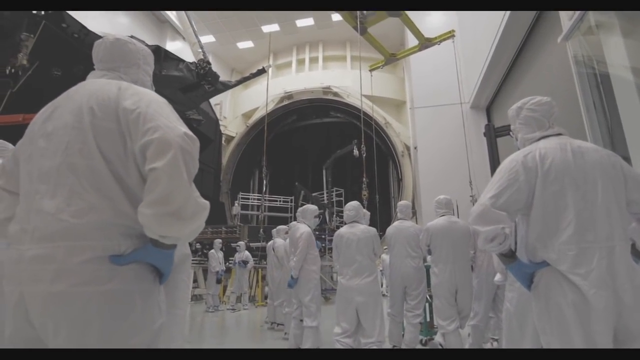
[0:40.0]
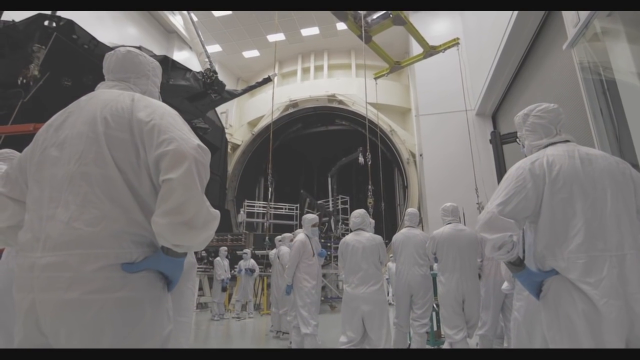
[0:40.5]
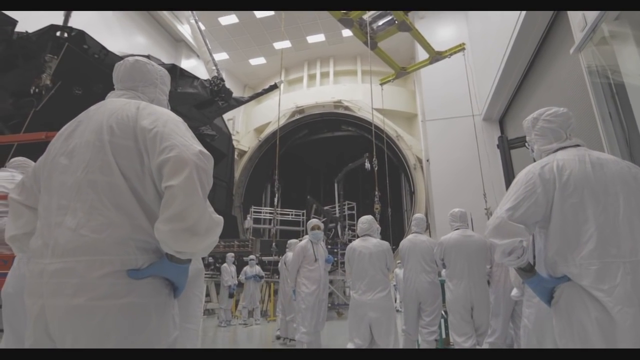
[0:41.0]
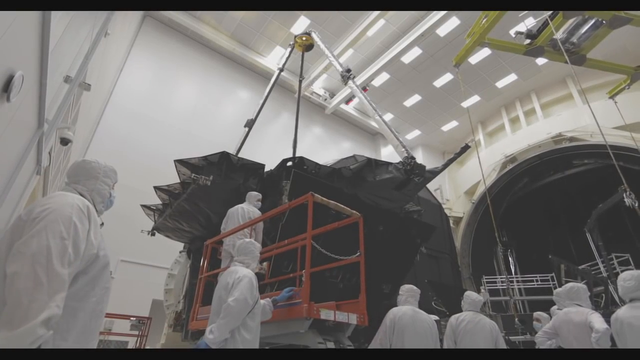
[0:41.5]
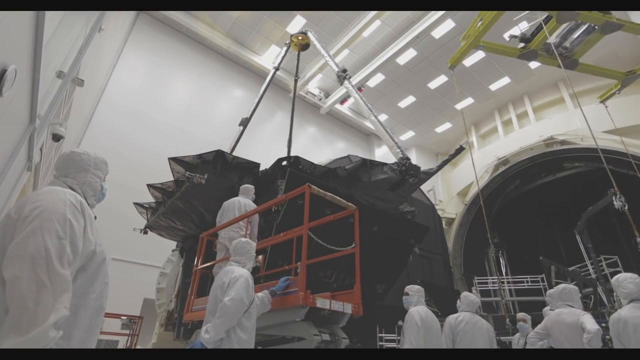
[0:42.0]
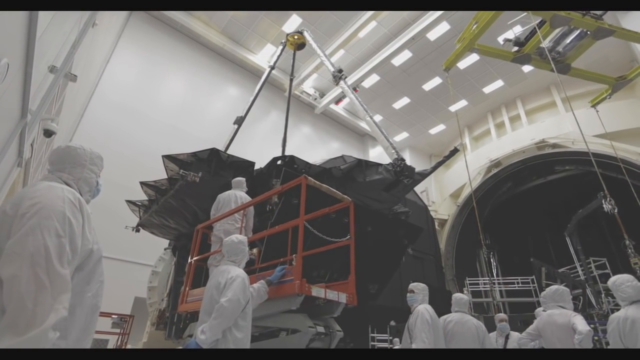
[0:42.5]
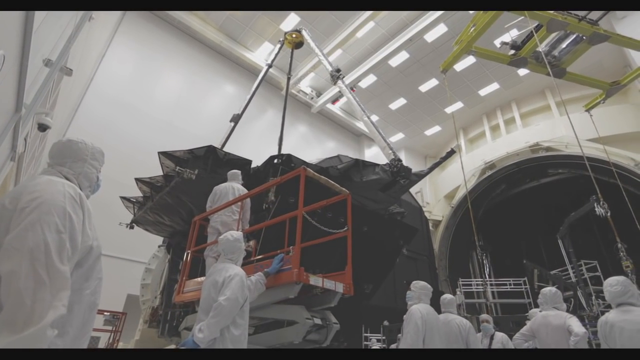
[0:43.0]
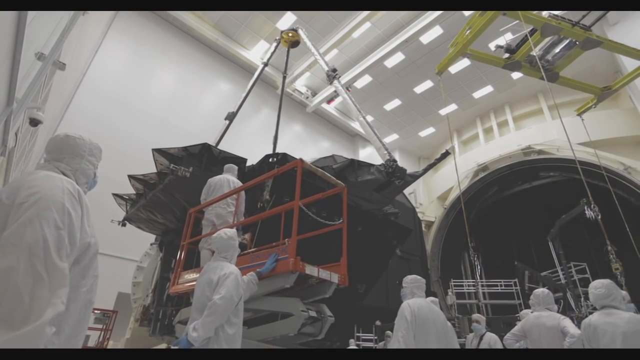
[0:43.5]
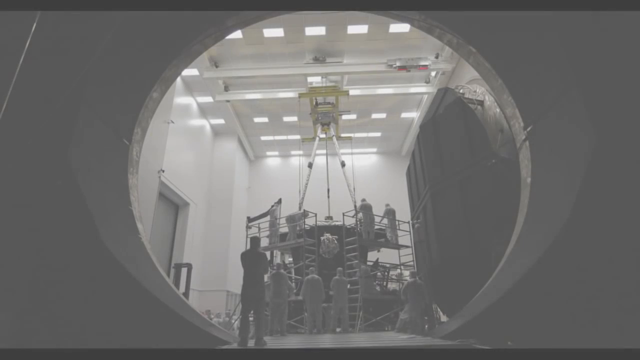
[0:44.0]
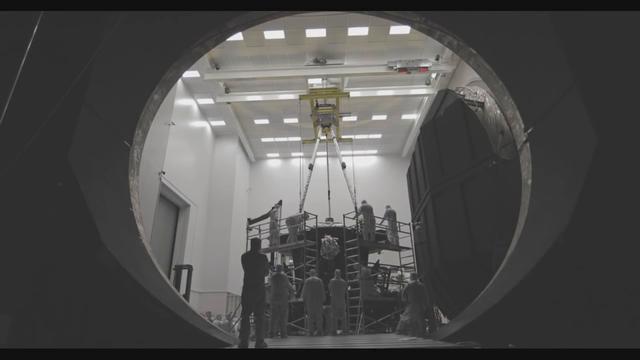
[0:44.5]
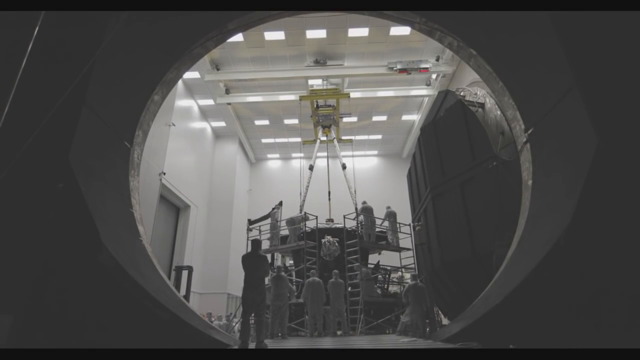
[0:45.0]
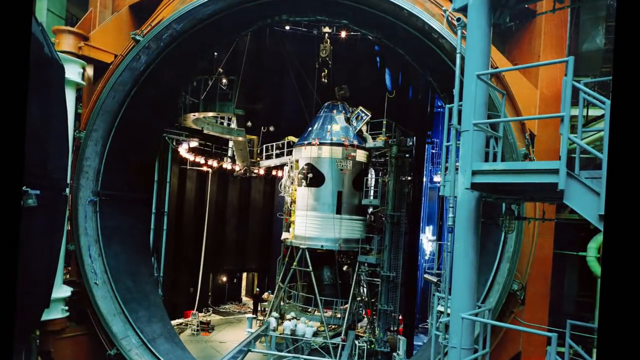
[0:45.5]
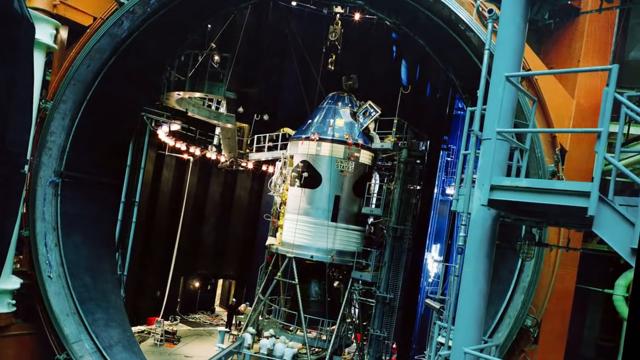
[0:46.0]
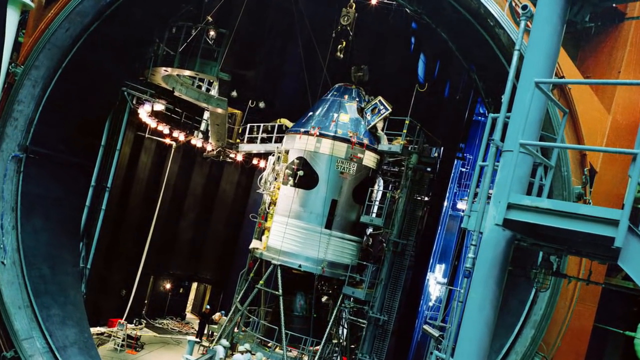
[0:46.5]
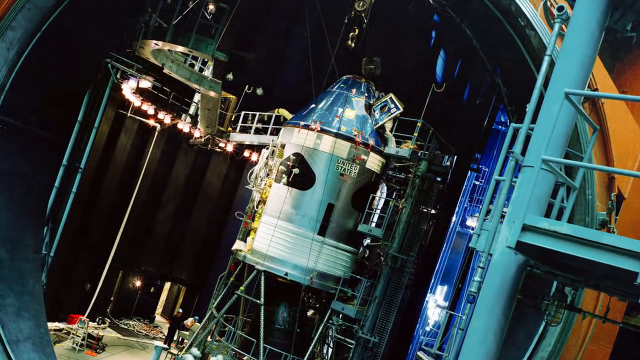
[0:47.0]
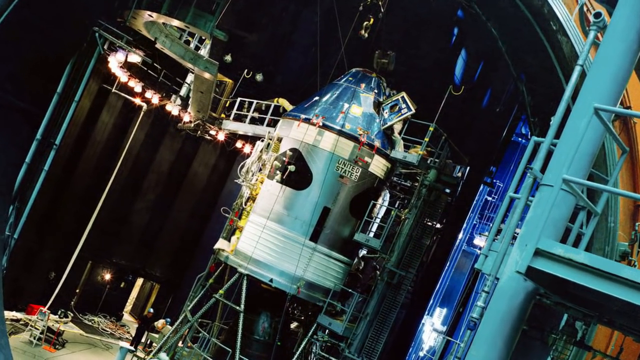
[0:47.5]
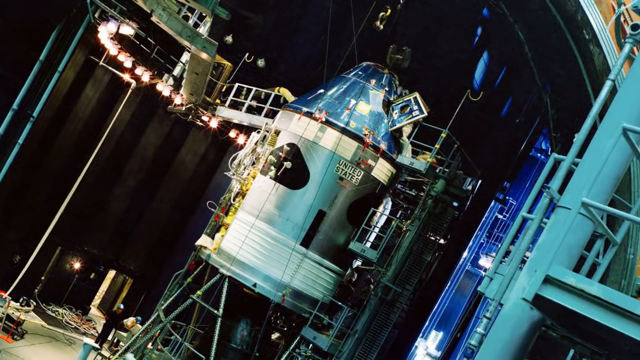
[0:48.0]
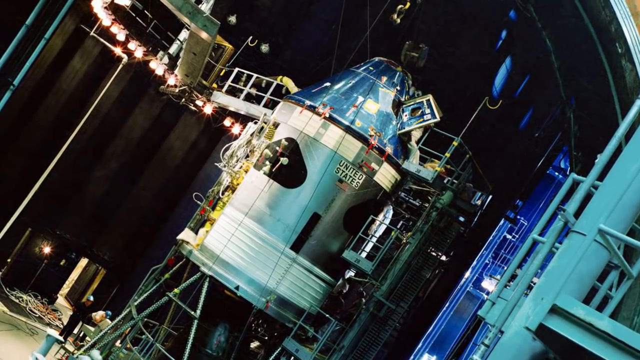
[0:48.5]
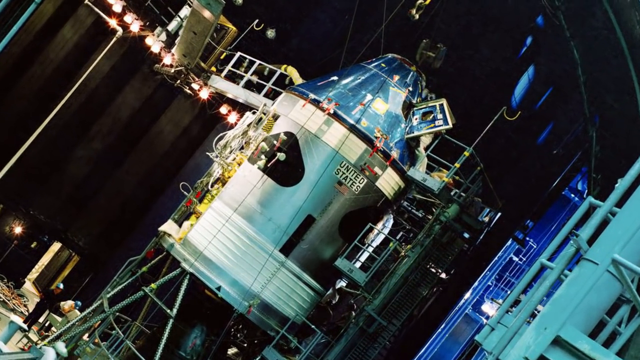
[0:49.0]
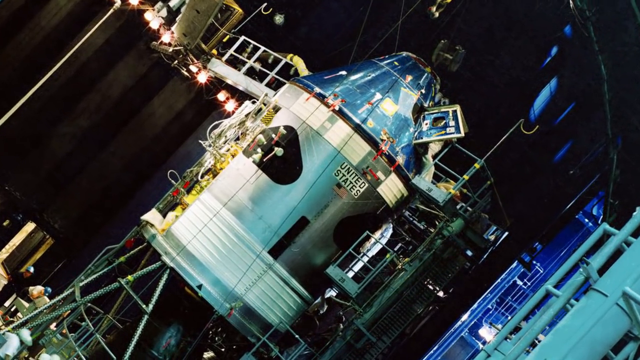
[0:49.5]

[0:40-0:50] The people in full-body white uniforms and blue gloves are seen standing again. A person rides a red platform up to the top of the ceiling. The scene moves to an item that almost looks like a large camera lens, inside of which a crane-type item holds up a metal structure. Then a round structure with a blue staircase on its outside appears, with a satellite seen up close in the middle of the structure.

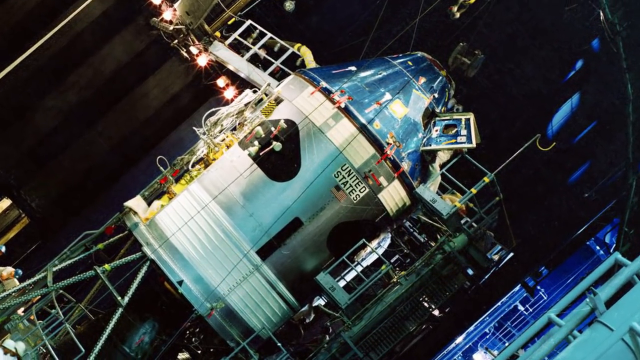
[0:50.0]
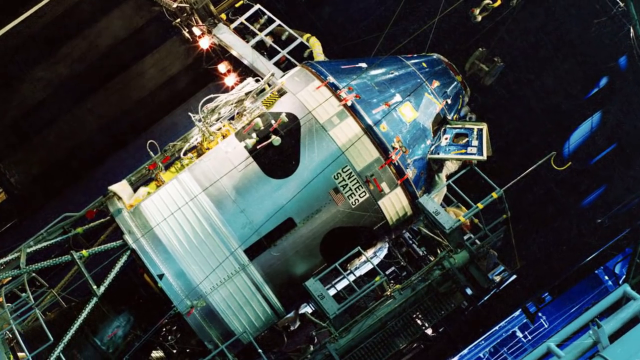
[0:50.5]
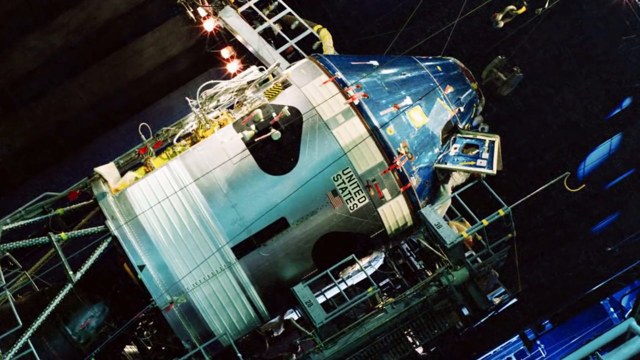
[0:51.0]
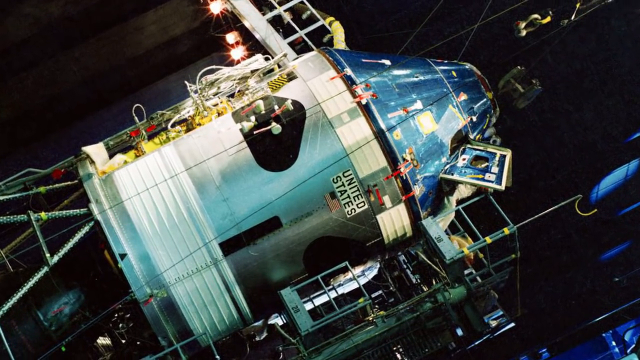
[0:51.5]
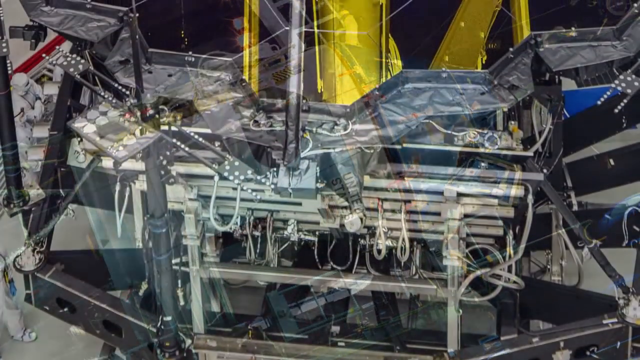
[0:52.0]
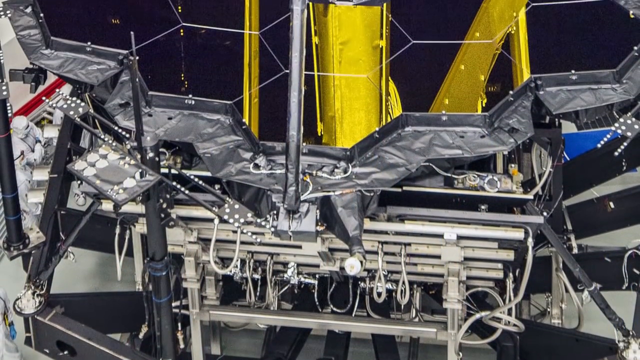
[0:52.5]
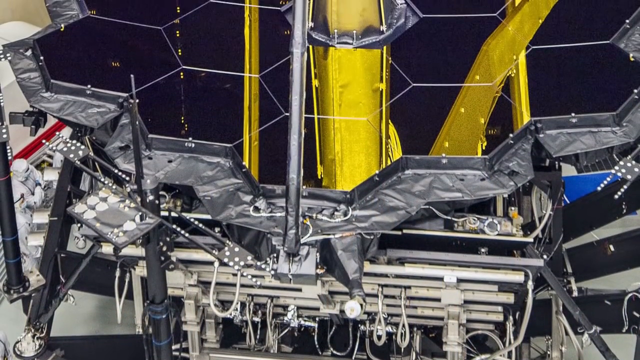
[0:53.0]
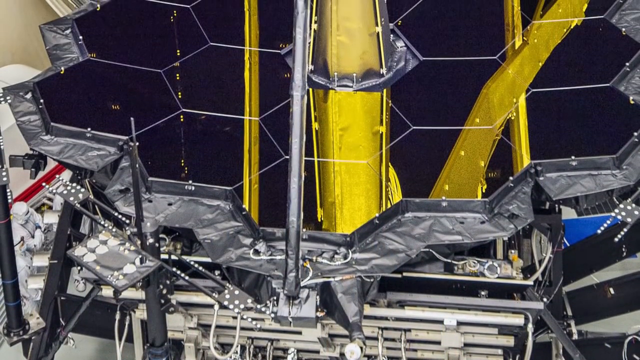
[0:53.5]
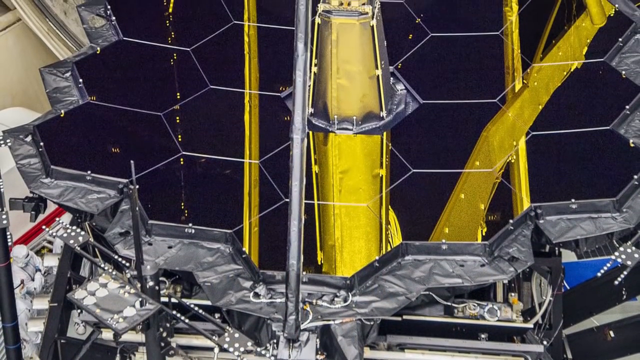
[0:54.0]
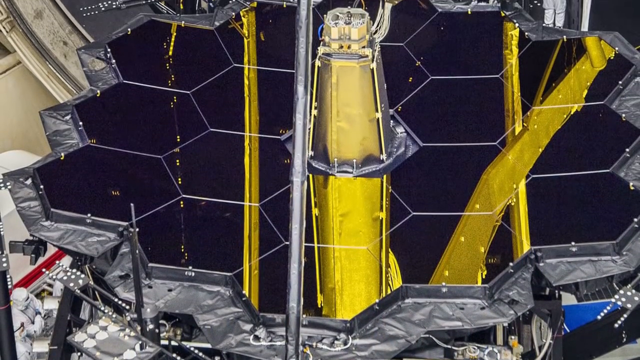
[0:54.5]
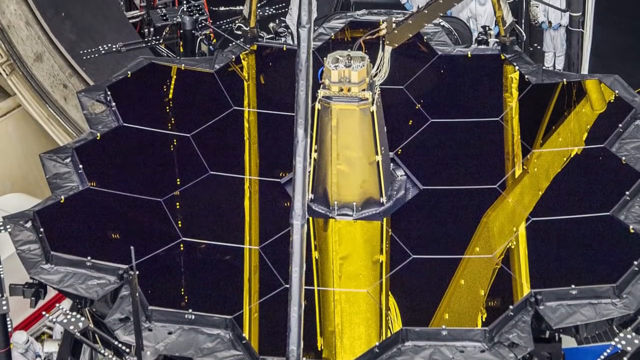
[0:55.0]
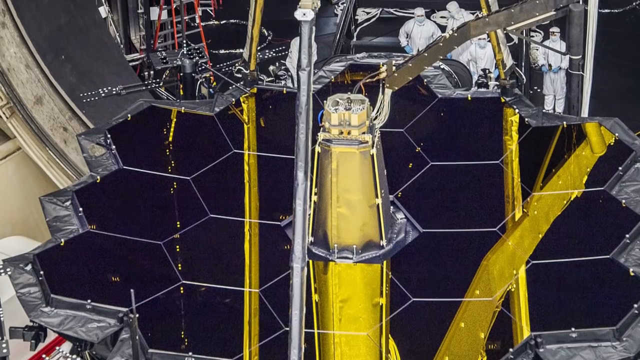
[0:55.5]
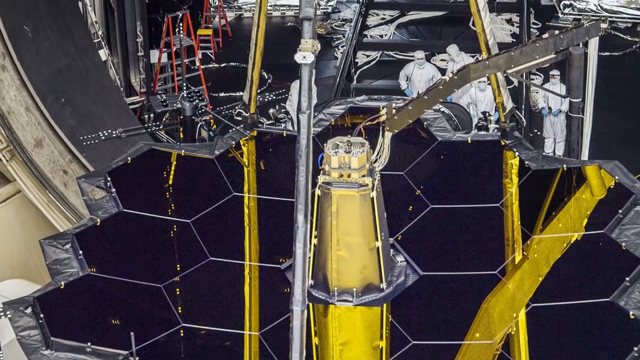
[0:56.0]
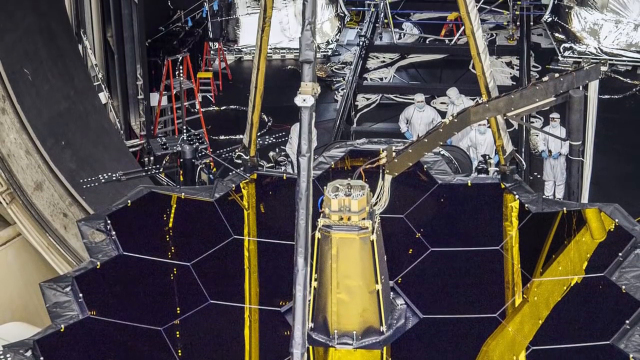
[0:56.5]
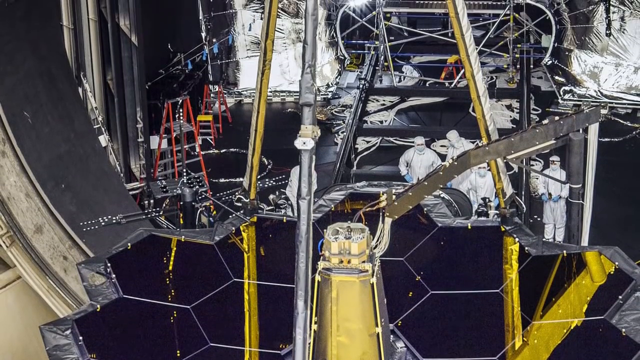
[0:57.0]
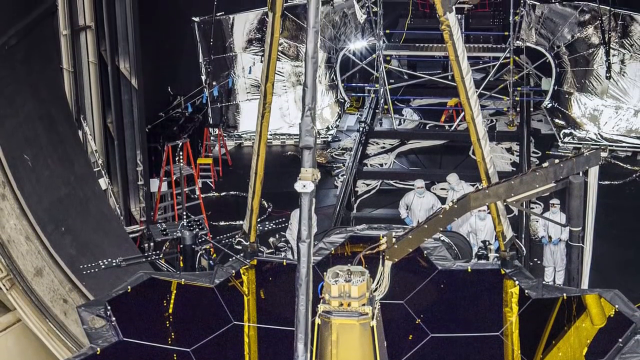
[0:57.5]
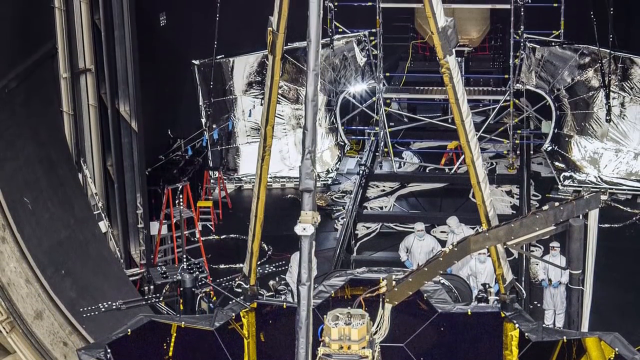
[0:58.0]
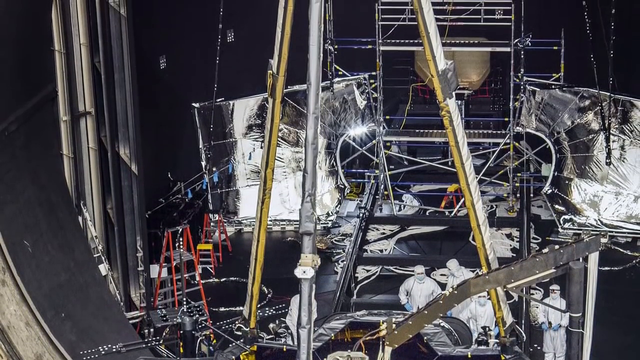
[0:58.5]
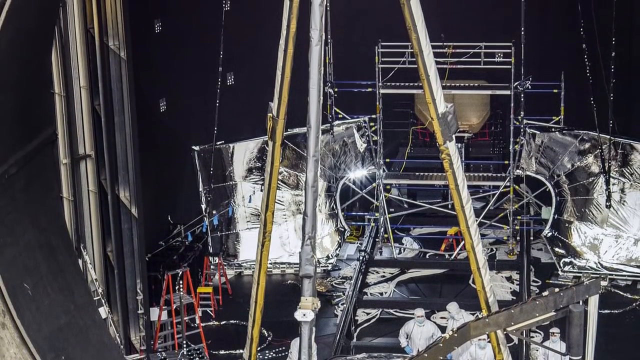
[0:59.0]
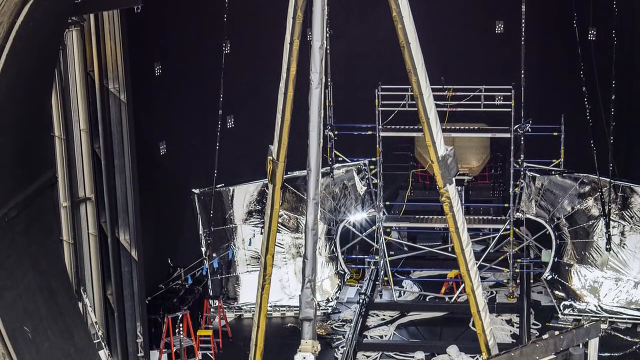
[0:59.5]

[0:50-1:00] An up-close image shows the satellite, with platforms on the outside of it where people are doing work on the satellite. A cylinder-shaped satellite object is blue at the top, then white, then gray, then white again. This structure is up on top of a yellow platform where people can work on it and see the inside parts of the structure. Pointed rectangular blue shapes are attached to the satellite-type structure.